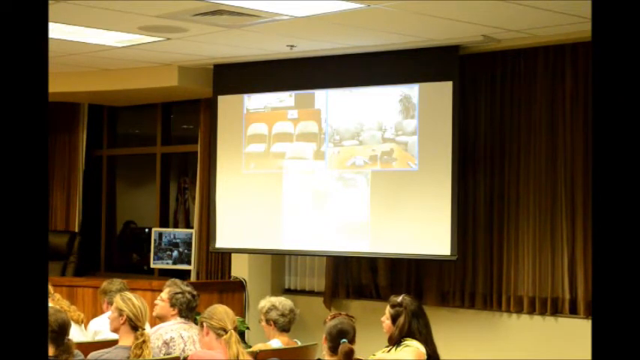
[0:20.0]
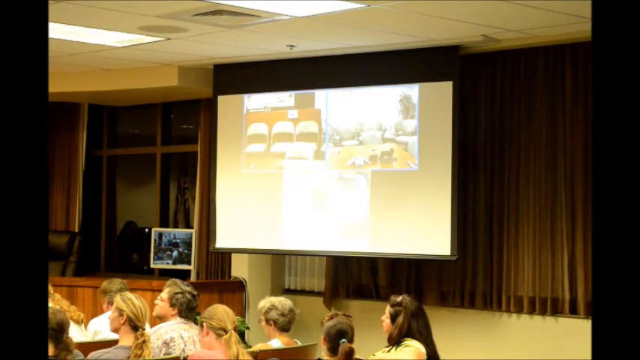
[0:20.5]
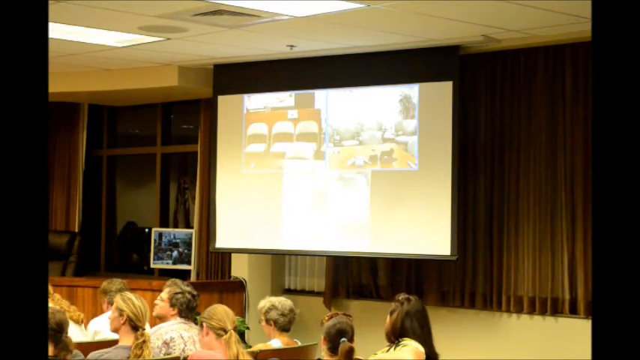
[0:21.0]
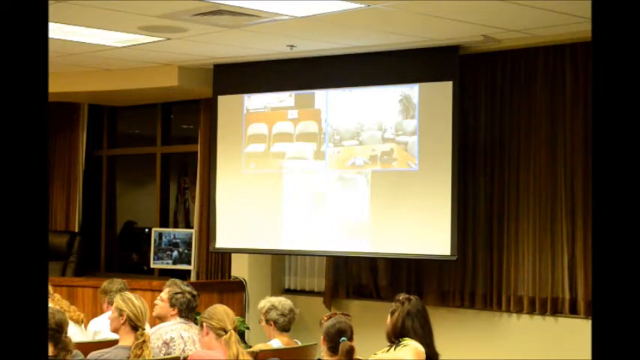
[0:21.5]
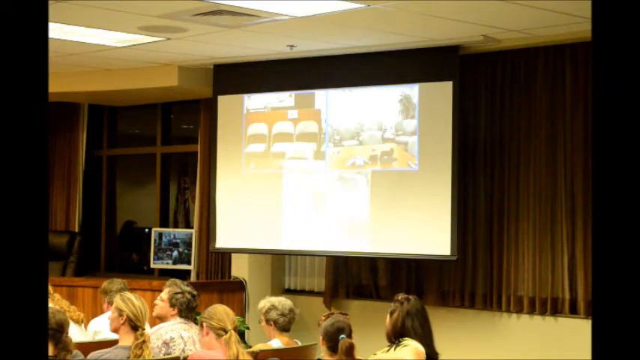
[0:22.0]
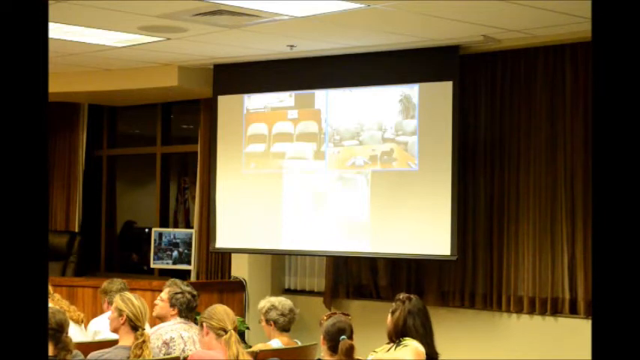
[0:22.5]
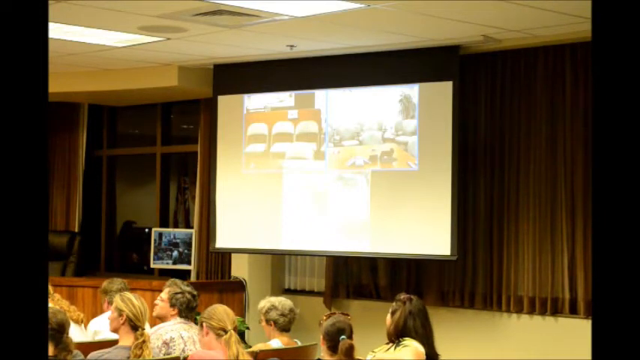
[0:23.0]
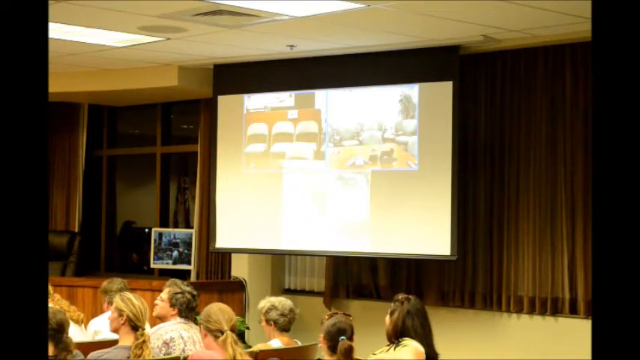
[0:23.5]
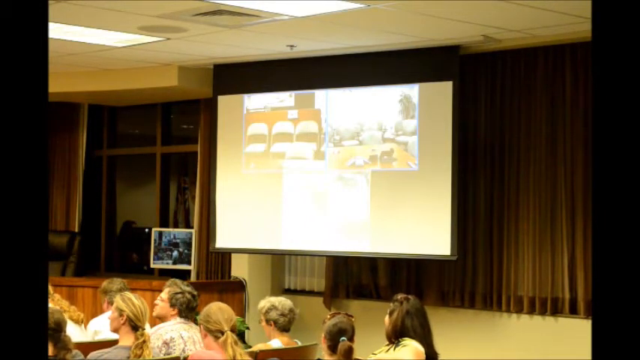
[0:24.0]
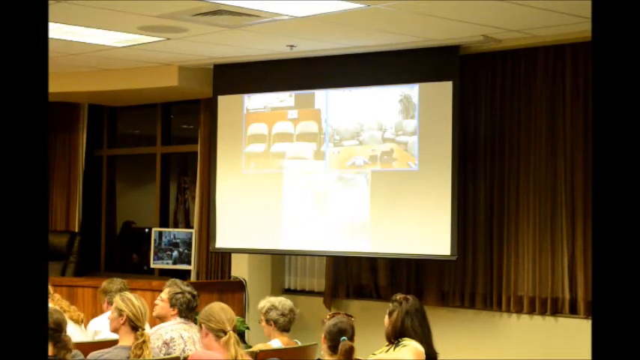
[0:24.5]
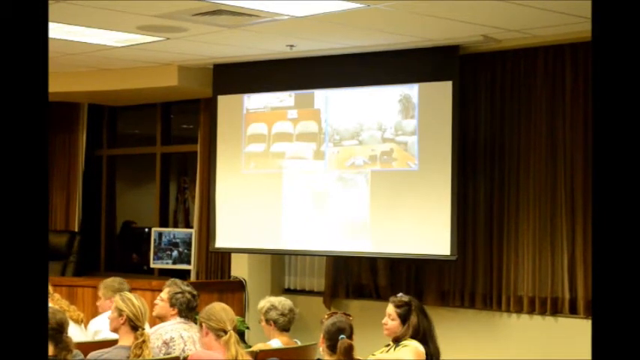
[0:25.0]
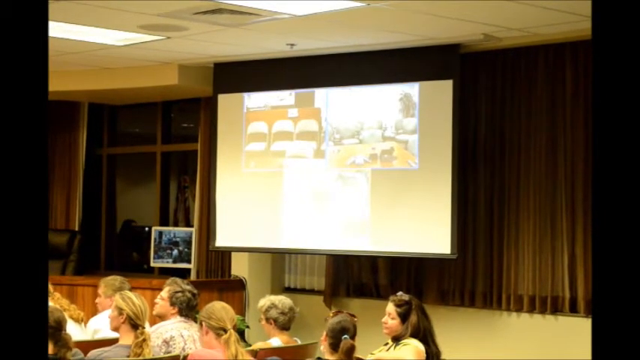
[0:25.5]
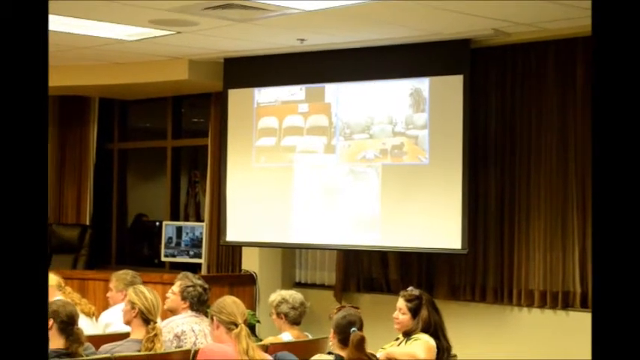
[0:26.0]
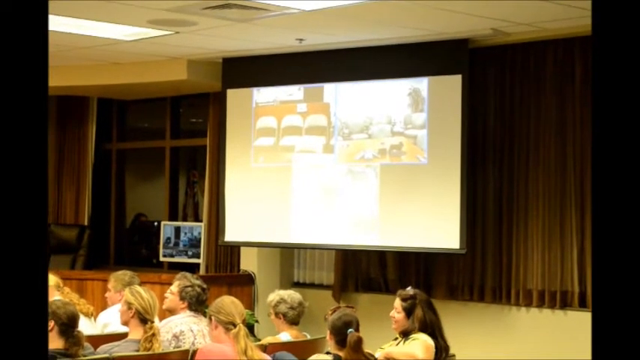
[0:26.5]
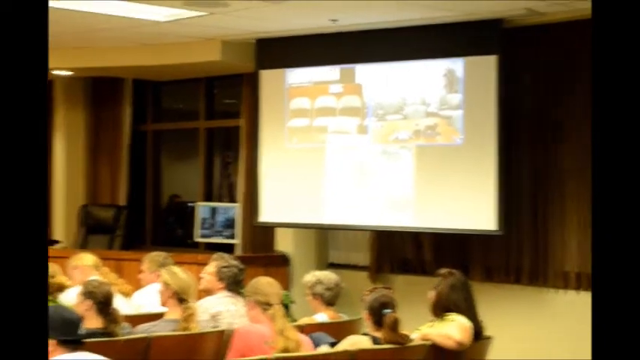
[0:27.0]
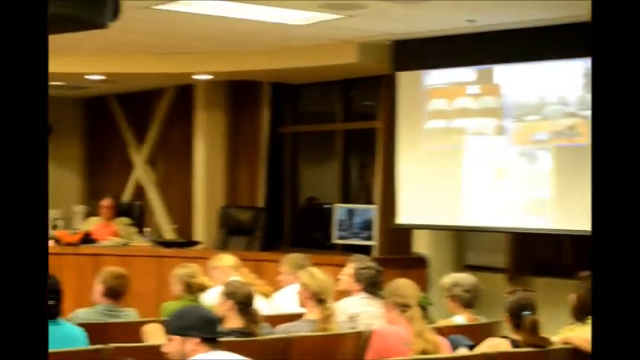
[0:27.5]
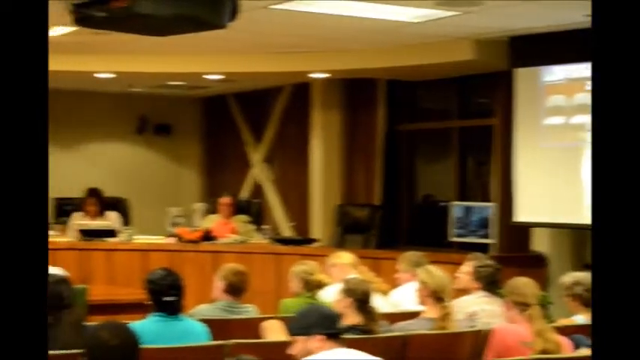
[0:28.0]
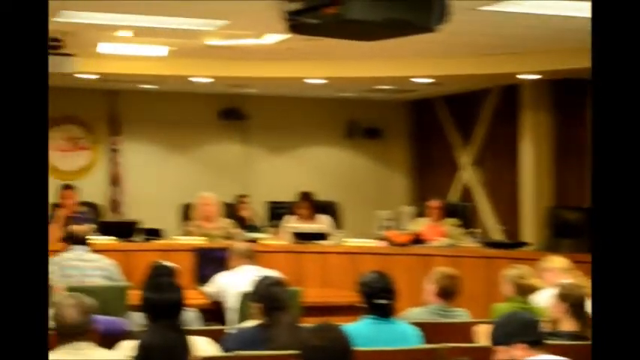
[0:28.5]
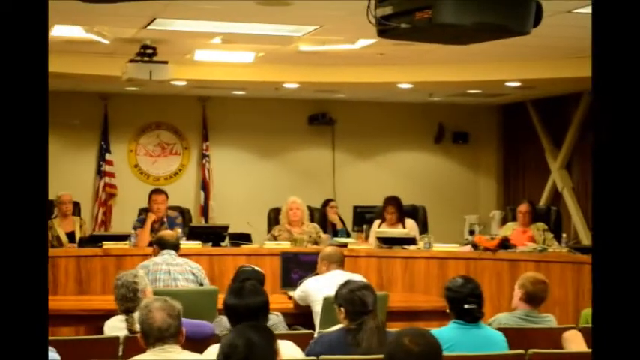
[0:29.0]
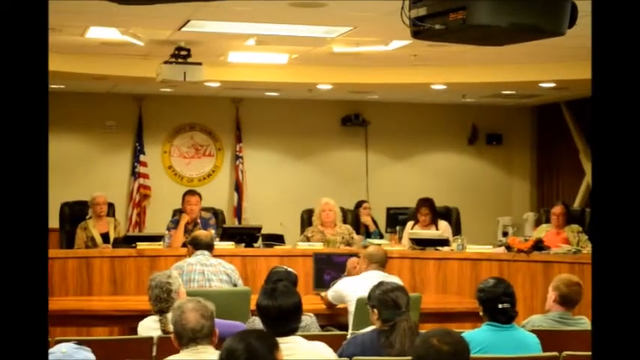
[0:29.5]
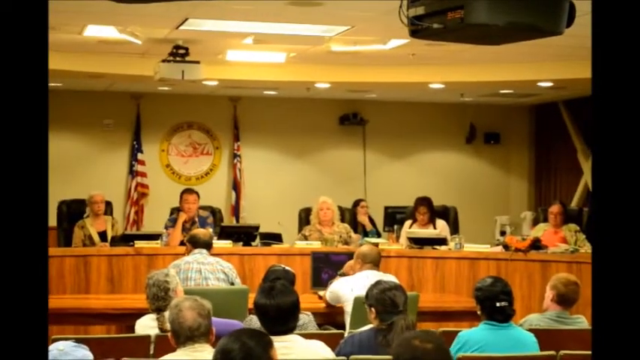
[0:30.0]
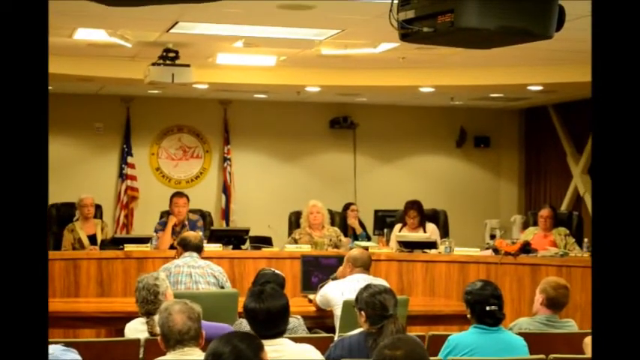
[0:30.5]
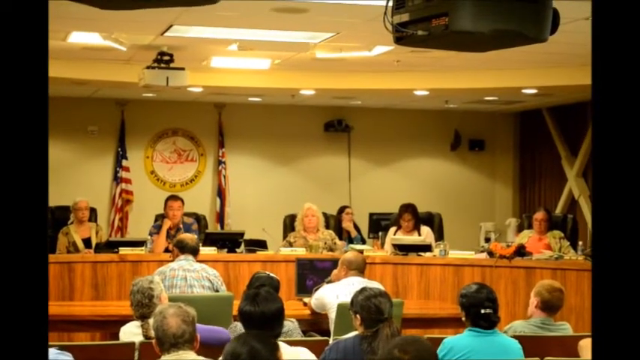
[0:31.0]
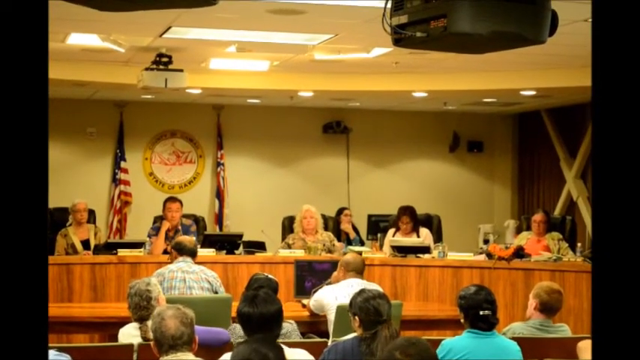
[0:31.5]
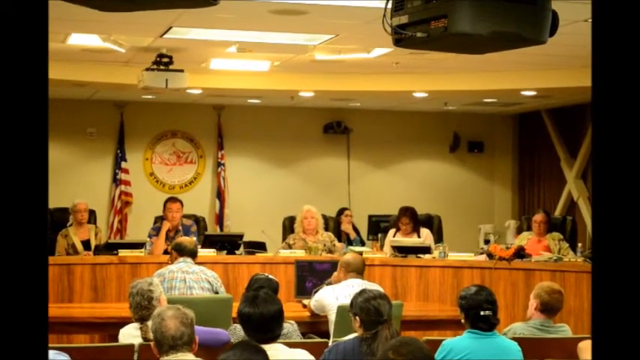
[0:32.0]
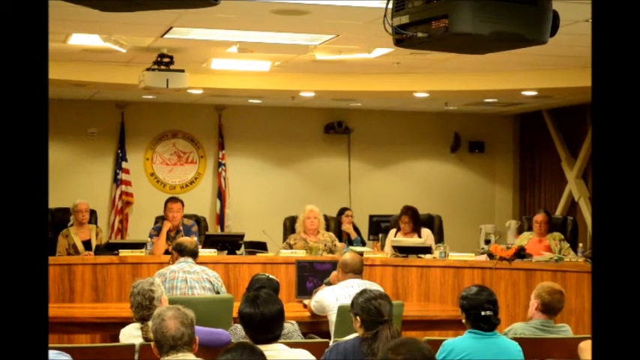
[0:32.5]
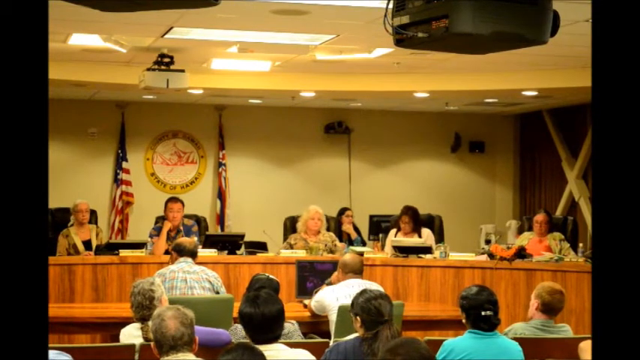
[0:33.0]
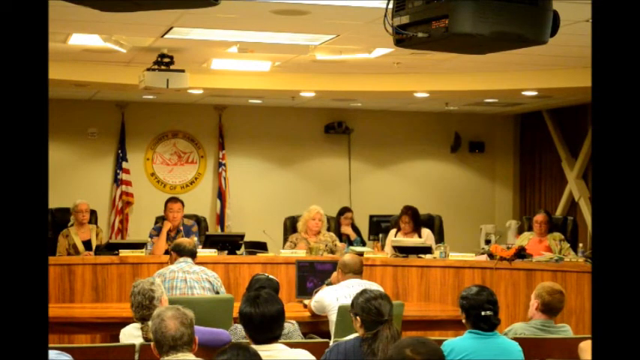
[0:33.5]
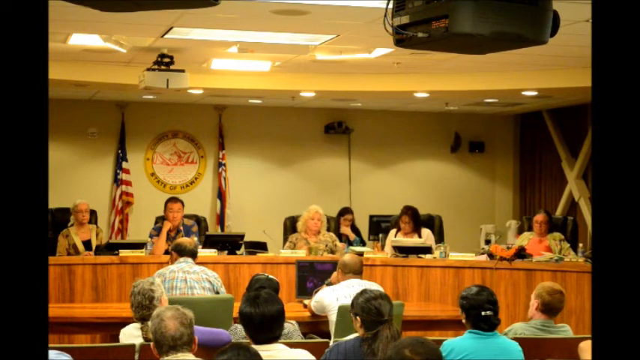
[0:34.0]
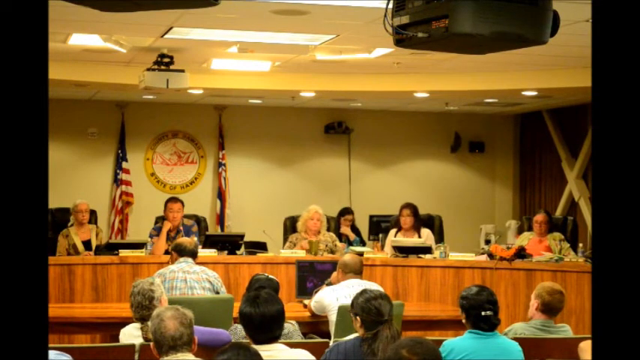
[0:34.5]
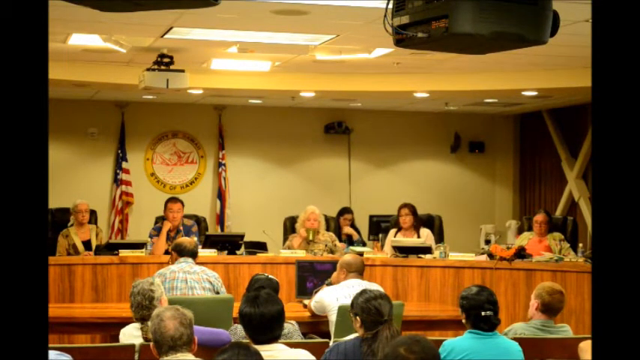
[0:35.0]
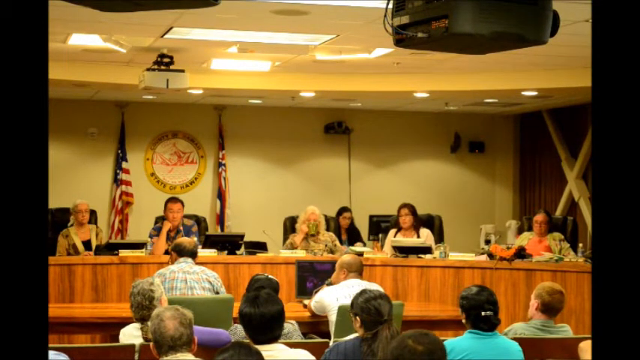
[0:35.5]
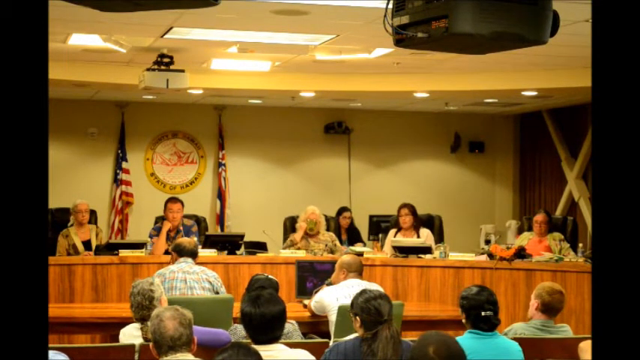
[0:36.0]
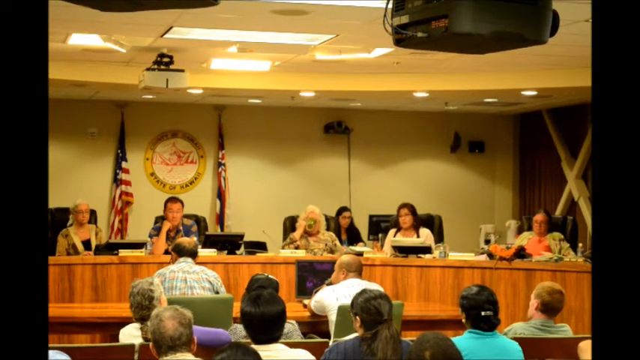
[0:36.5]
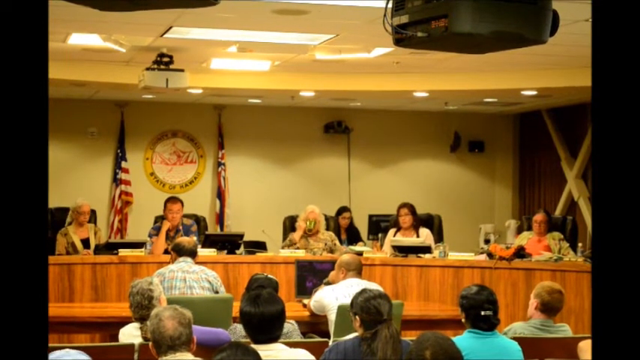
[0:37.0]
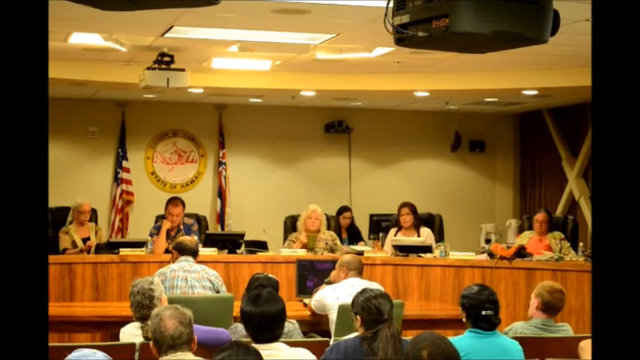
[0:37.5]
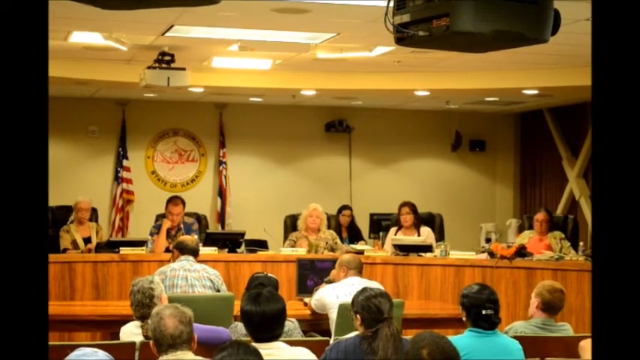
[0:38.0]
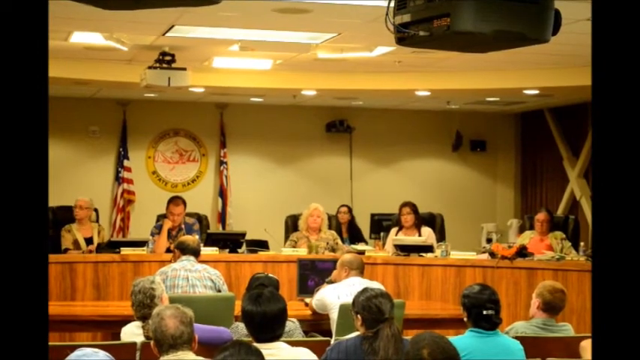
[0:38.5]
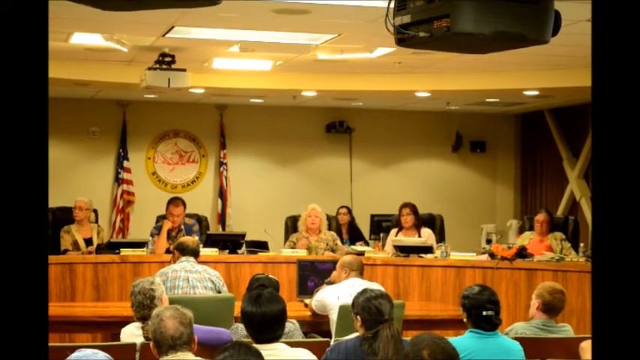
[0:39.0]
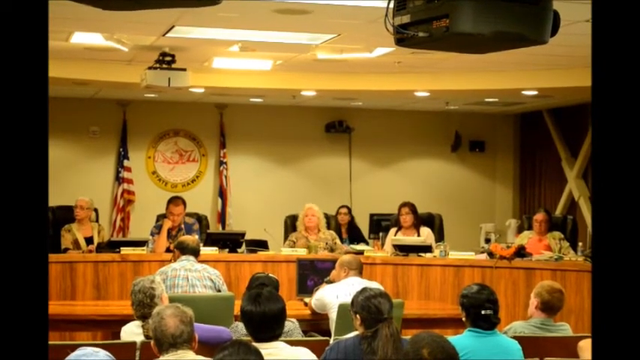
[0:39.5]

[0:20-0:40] The camera stays on the room where the people are seated, at least eleven of them. It then turns to the left and shows even more people in the room. A few people sit way in the front, in front of the others, and the seated audience is apparently listening to them speak. Quite a few people are seated in the front.